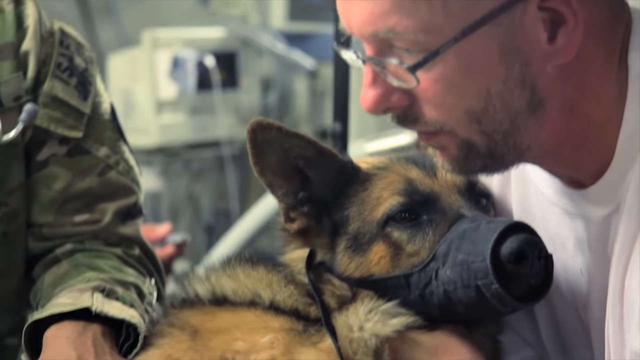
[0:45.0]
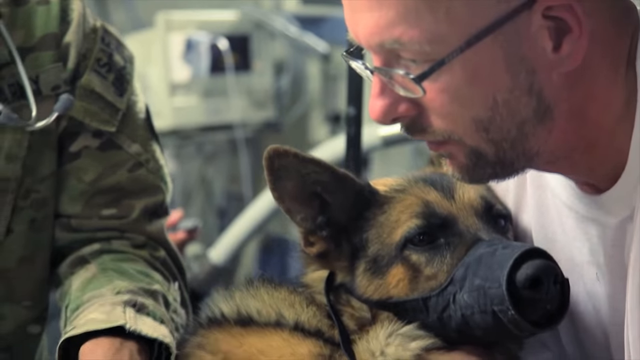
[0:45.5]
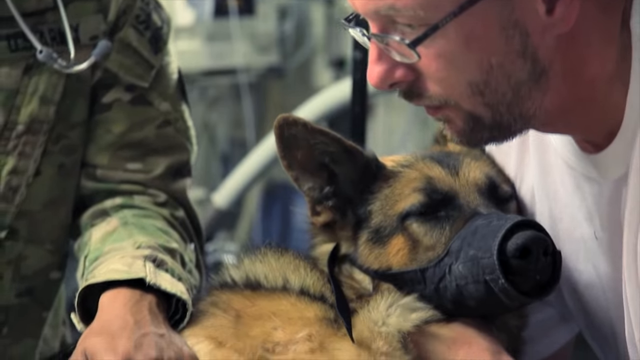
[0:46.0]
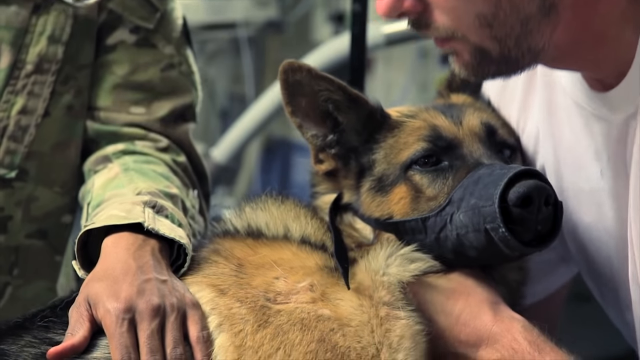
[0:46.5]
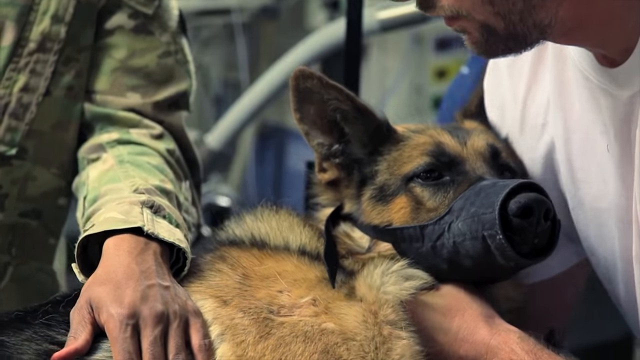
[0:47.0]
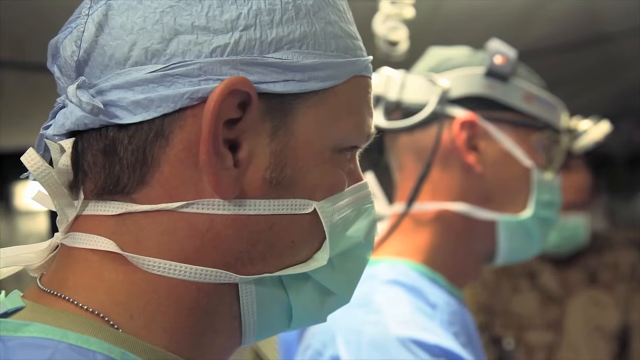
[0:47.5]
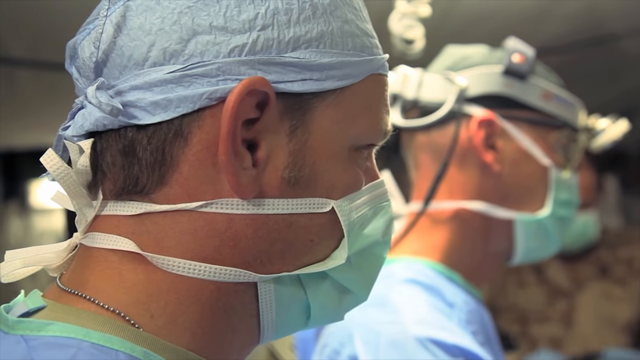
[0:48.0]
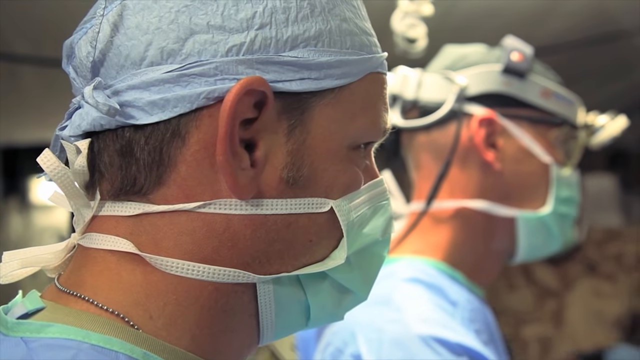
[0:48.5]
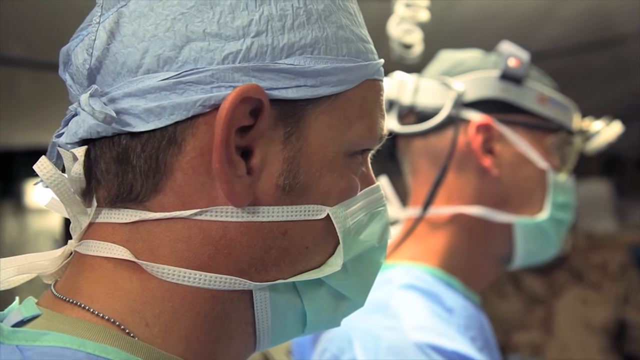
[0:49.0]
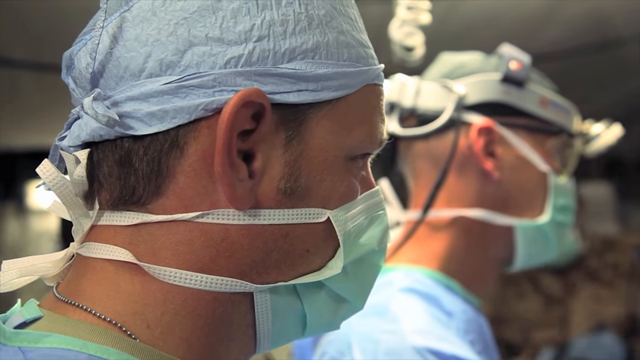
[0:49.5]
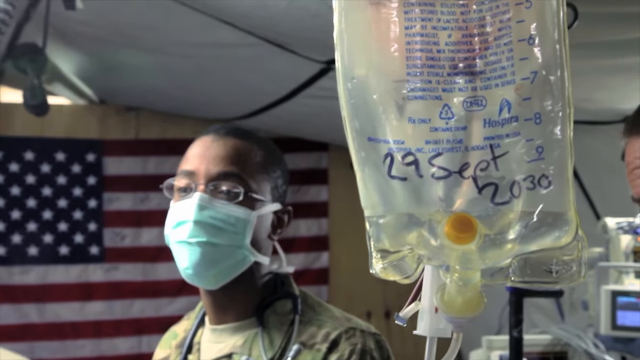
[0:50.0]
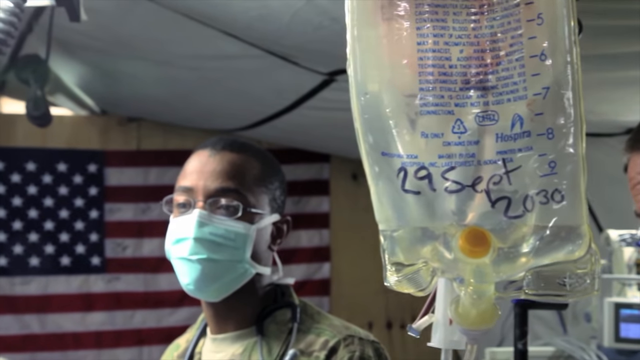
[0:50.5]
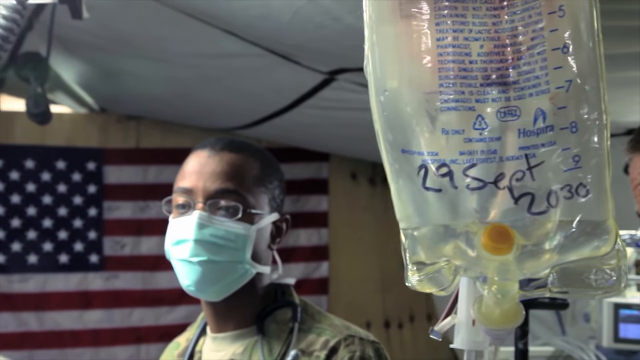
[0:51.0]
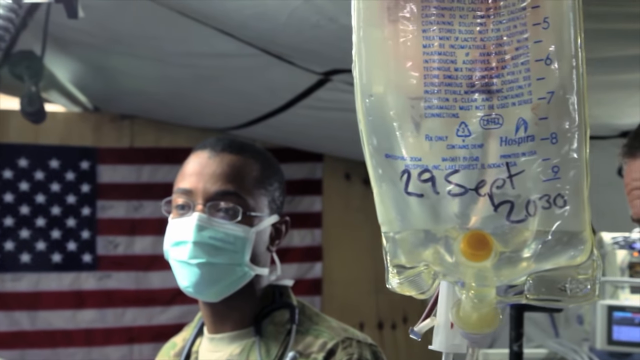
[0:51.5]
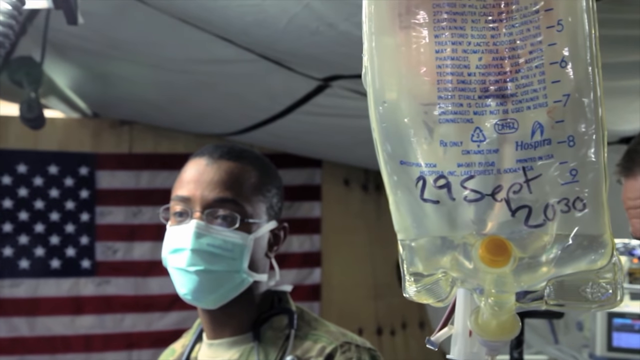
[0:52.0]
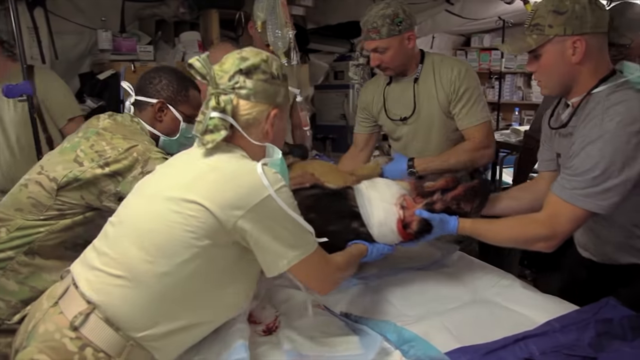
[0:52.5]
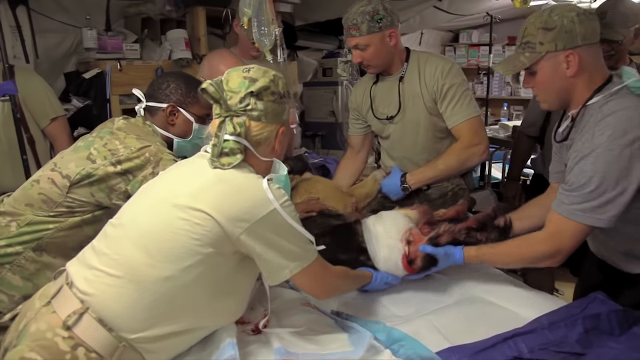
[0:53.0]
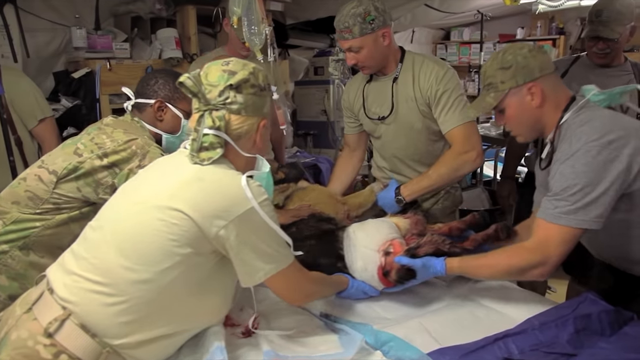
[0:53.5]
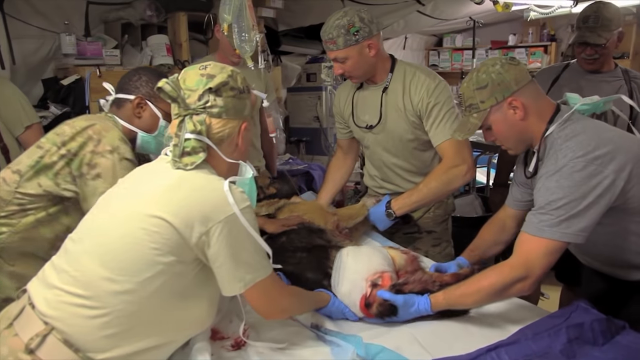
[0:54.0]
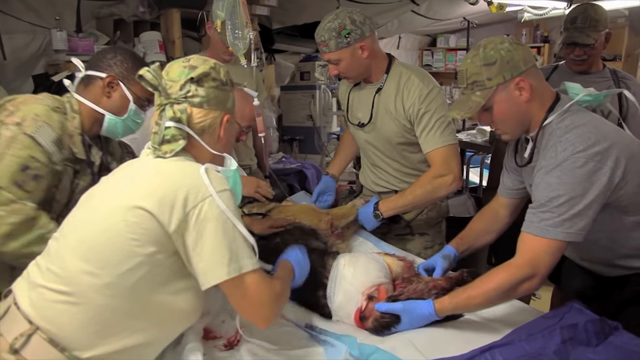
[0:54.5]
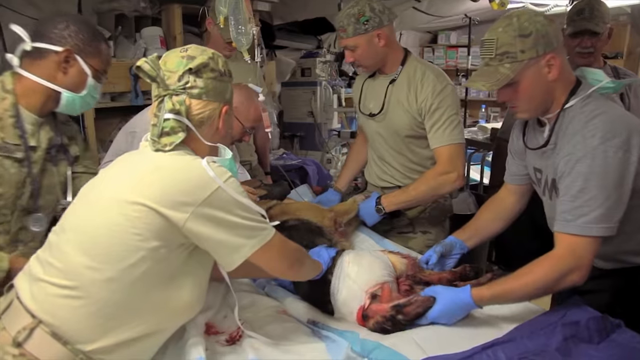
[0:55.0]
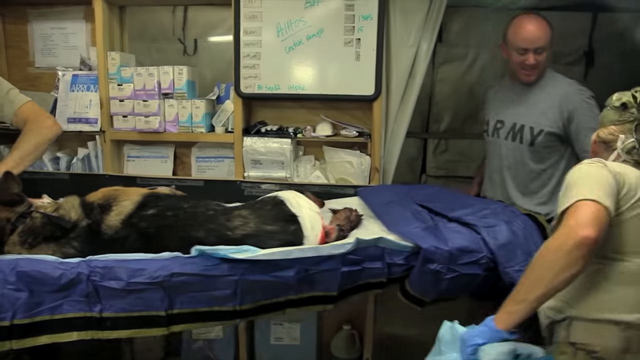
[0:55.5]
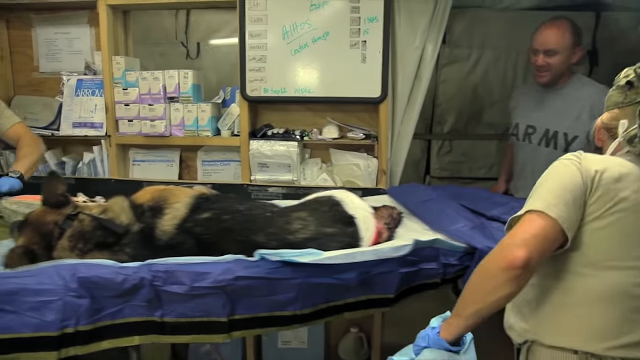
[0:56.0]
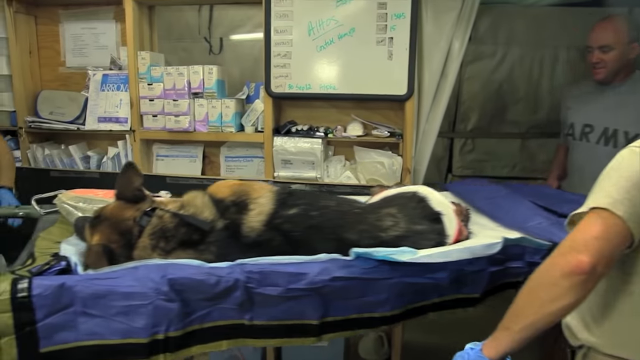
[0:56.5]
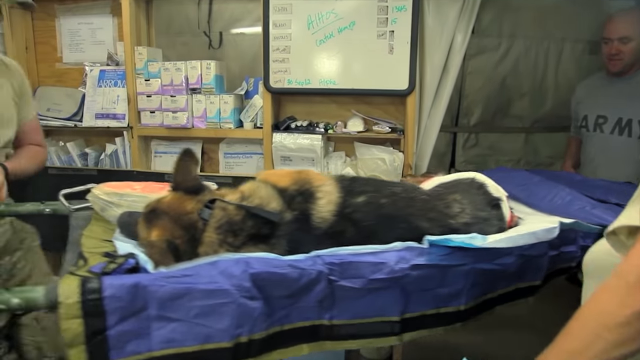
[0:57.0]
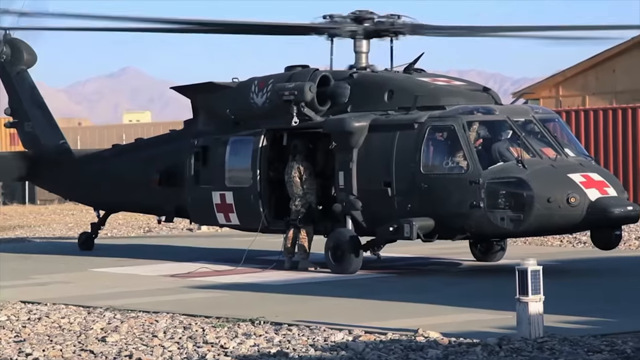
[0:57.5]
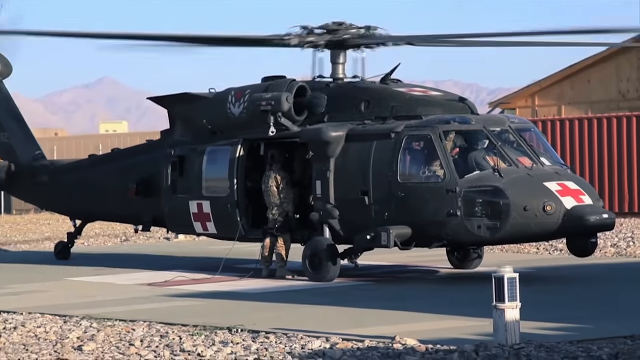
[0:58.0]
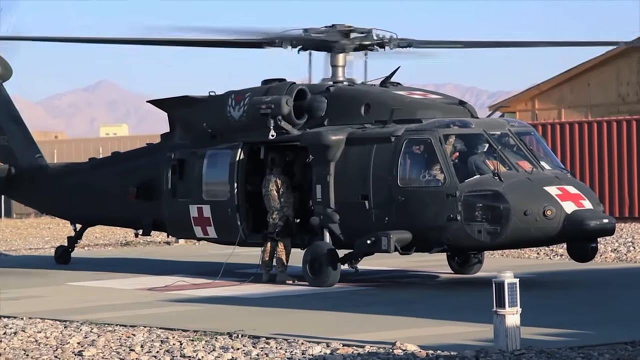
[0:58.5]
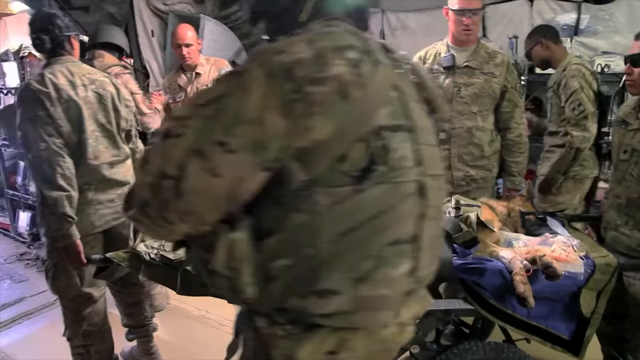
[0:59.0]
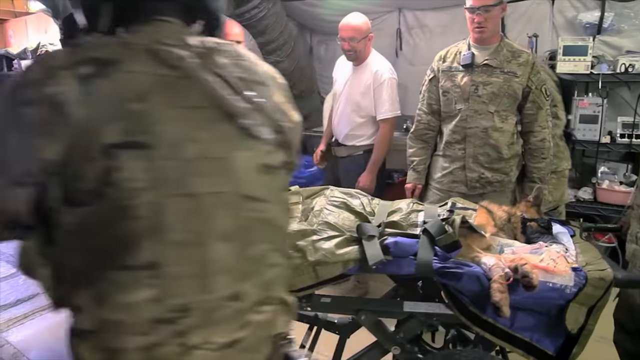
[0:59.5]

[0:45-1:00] An army German Shepherd goes through surgery. Close-up pictures show people petting the dog, moving it around on a gurney, putting it on an army helicopter, and the IV hooked up to it. The dog is heavily sedated but still appears to be awake, is wrapped in a dressing, and is quite bloody from its injuries. The people taking care of it appear to be doing a good job and to be quite caring. The setting is a field medical tent.